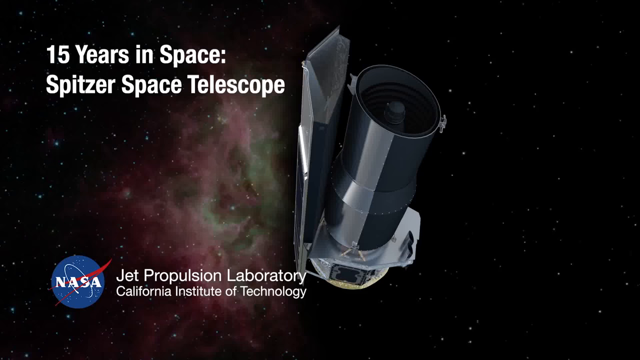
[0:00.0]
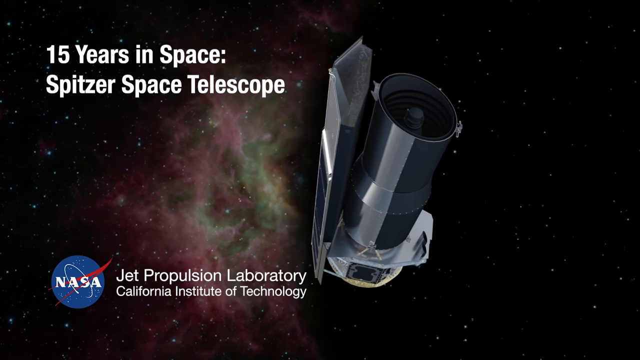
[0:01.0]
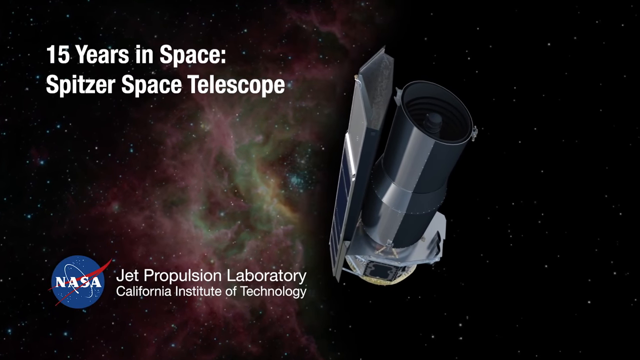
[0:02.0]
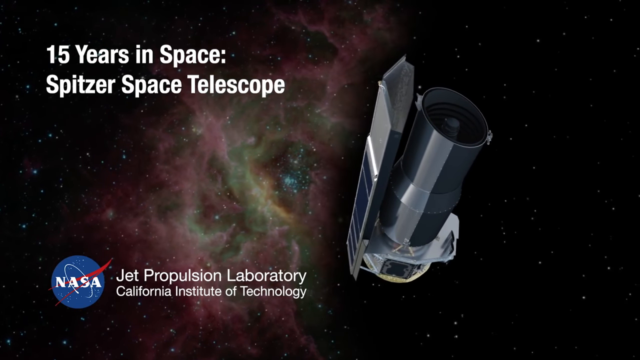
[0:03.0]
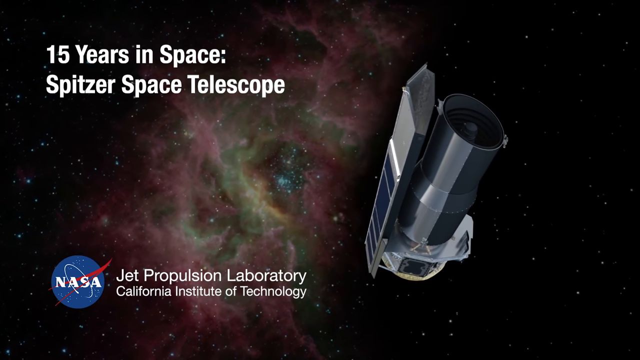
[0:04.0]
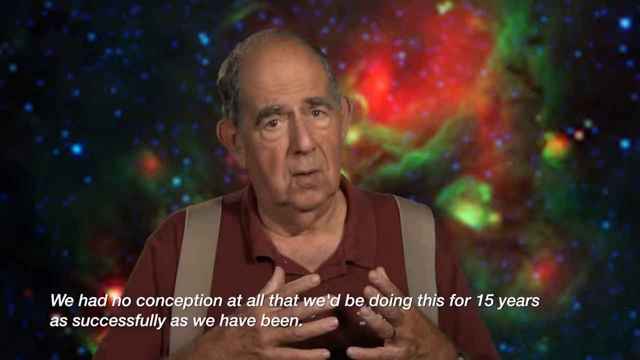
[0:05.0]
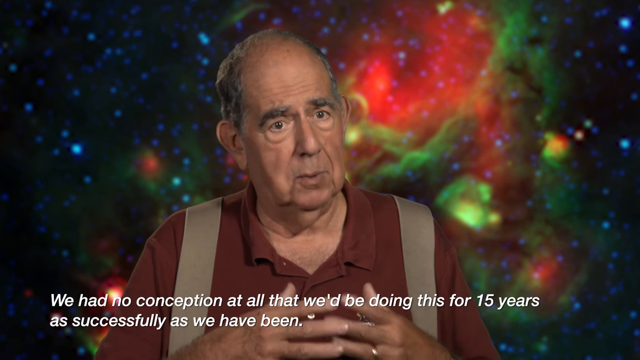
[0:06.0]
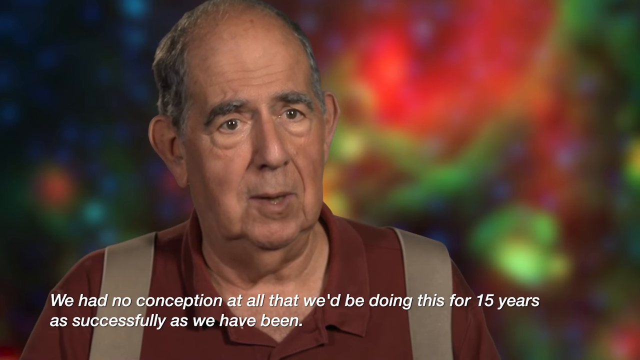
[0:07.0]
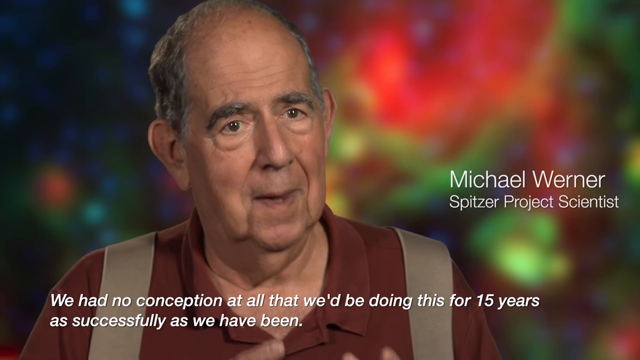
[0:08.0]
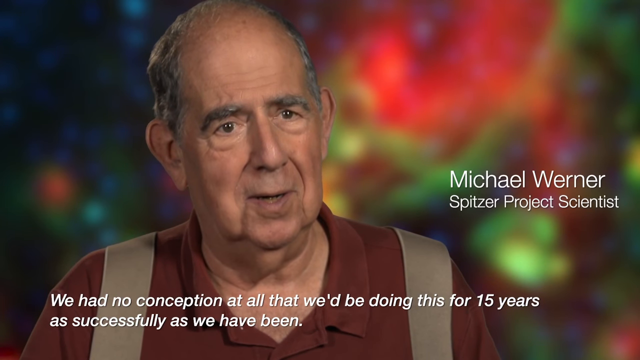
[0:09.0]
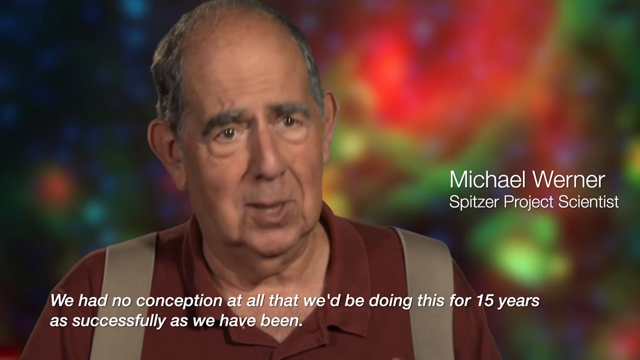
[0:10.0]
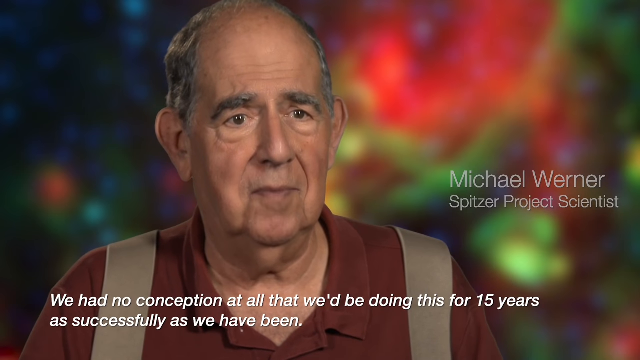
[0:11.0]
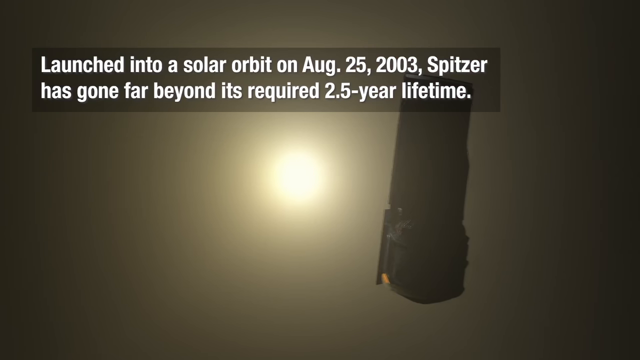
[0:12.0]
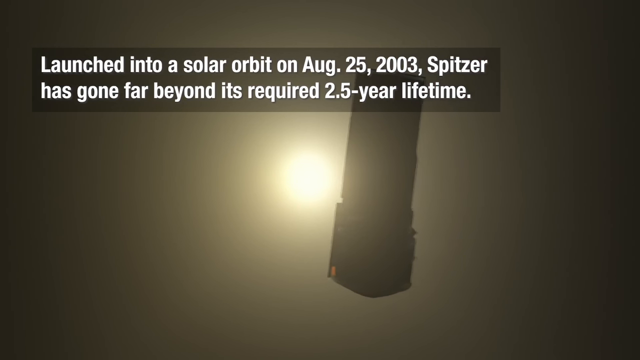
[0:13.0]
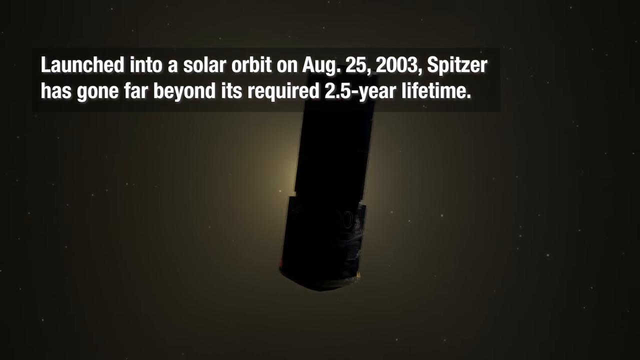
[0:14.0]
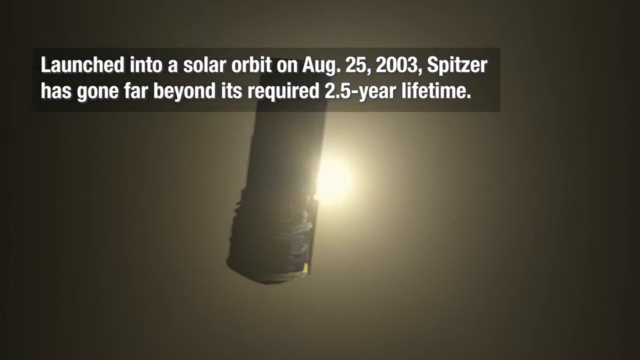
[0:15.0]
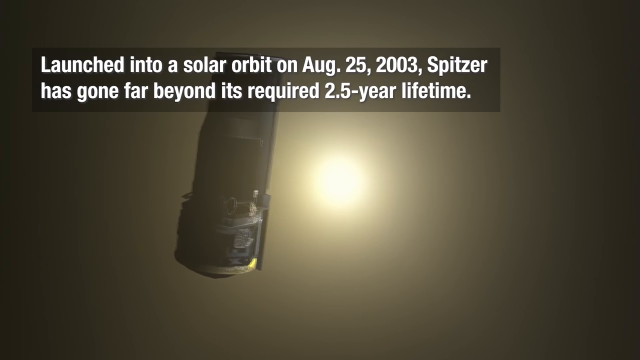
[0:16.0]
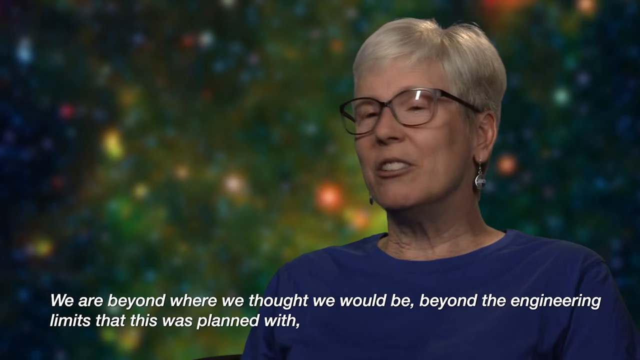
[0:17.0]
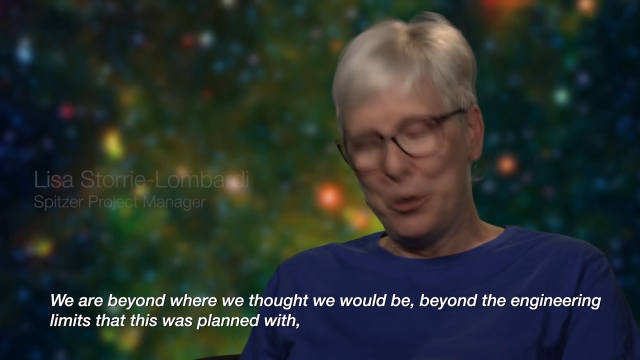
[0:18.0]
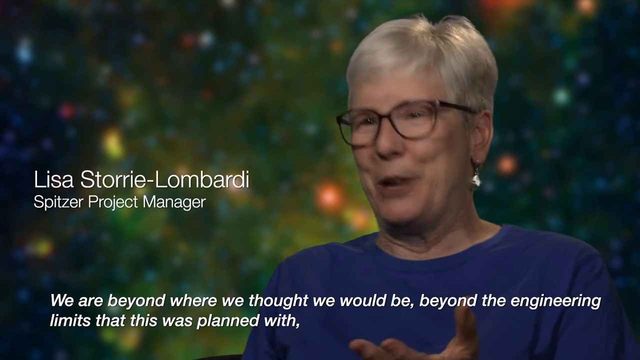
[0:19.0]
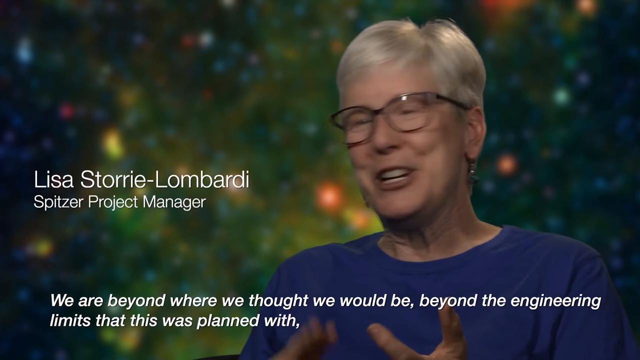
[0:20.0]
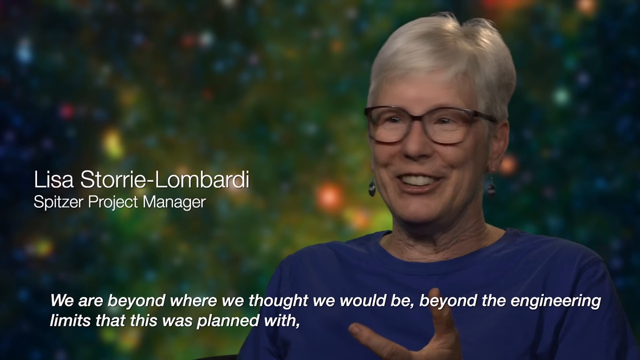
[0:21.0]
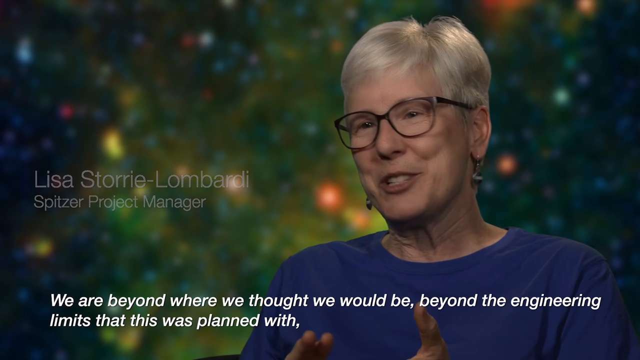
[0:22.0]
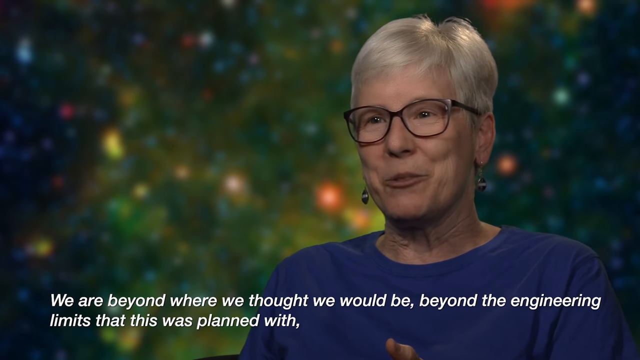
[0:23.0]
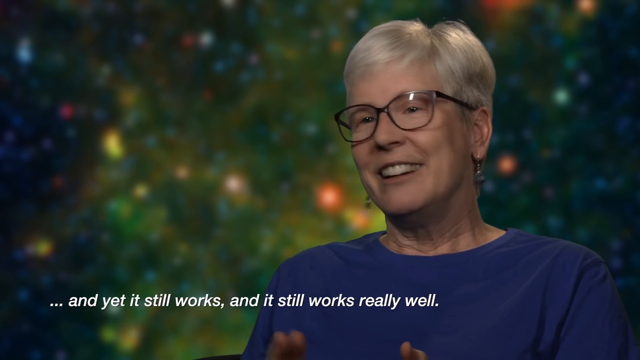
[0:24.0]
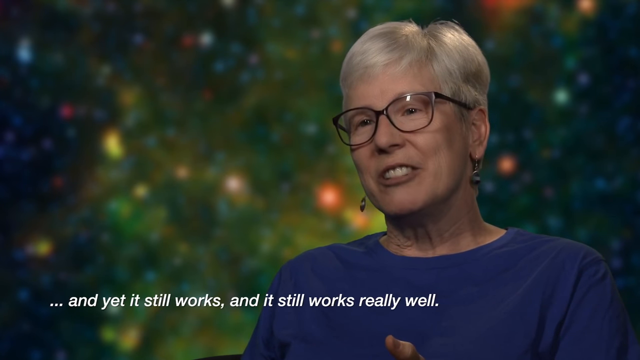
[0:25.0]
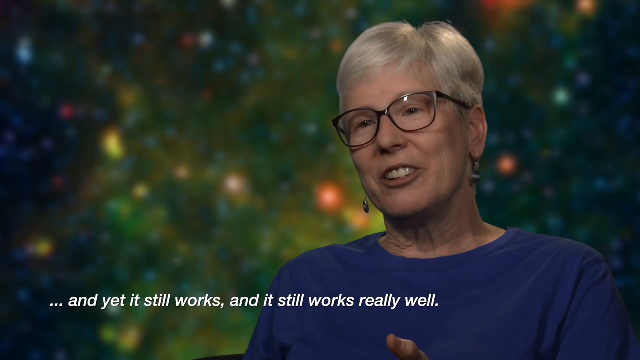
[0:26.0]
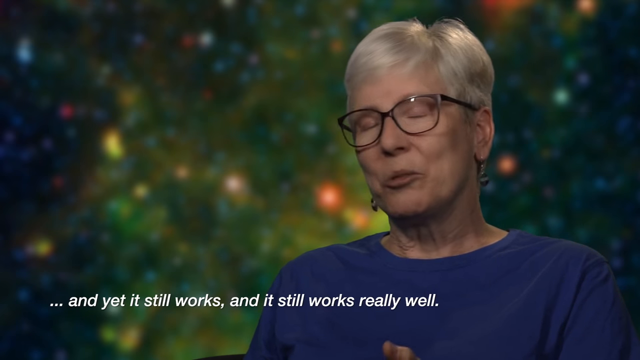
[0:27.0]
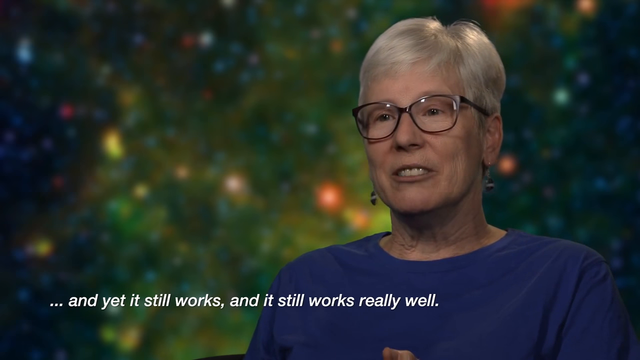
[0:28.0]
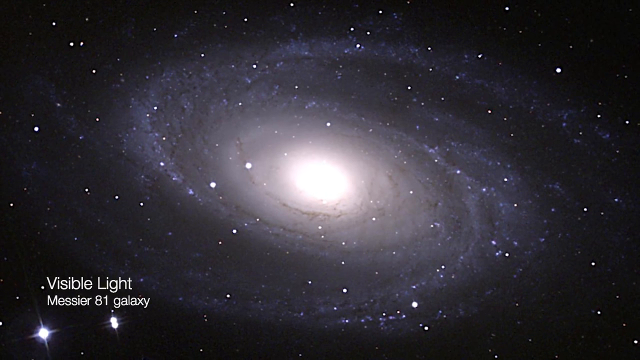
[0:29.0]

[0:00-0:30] The video opens with the NASA logo in the bottom left: a blue circle with the word NASA and a hoop going through it, with a red flame behind. To the right is the text "Jet Propulsion Laboratory, California Institute of Technology". The computer-generated scene shows outer space and some type of space object, with the text "15 years in space, Spitzer Space Telescope". The telescope kind of drifts away from the camera, revealing a very purple, green and yellow galaxy to its left. As the telescope continues to move off to the right, more and more of the galaxy is revealed on the left. The shot then switches to an interview with an older man who is seated, his hands in the frame; his hands kind of move and his lips move as he talks.